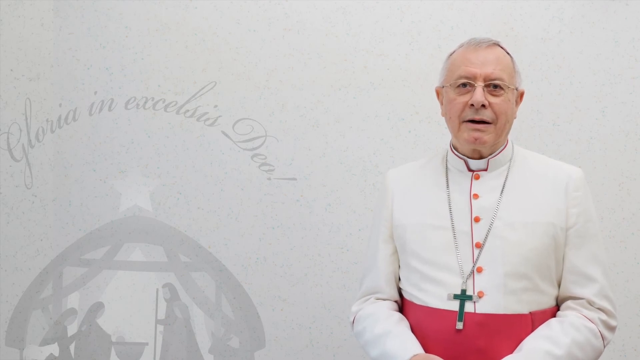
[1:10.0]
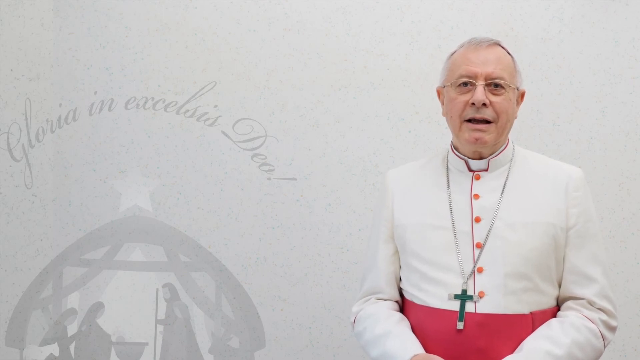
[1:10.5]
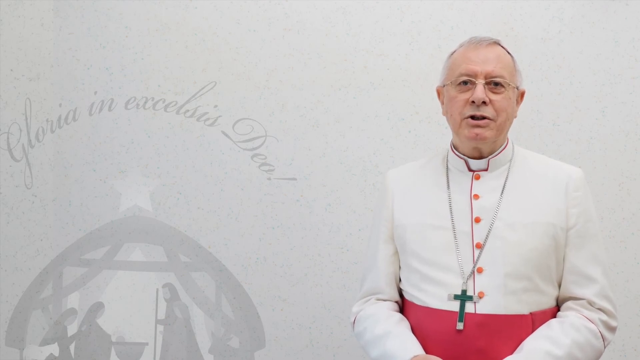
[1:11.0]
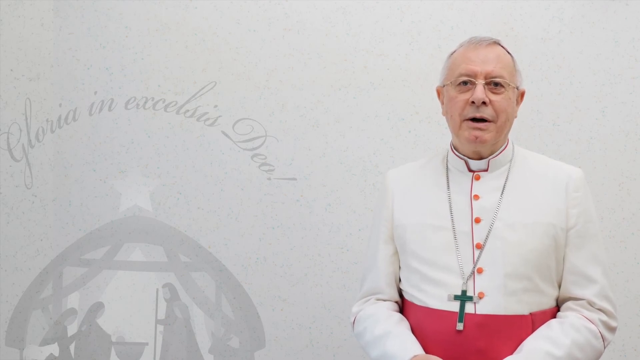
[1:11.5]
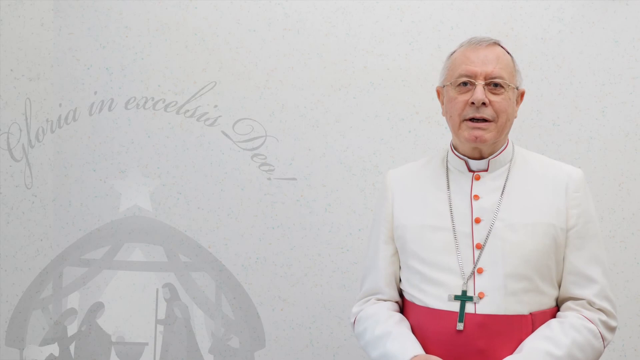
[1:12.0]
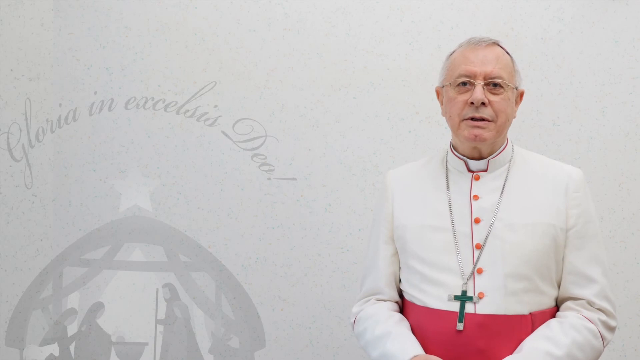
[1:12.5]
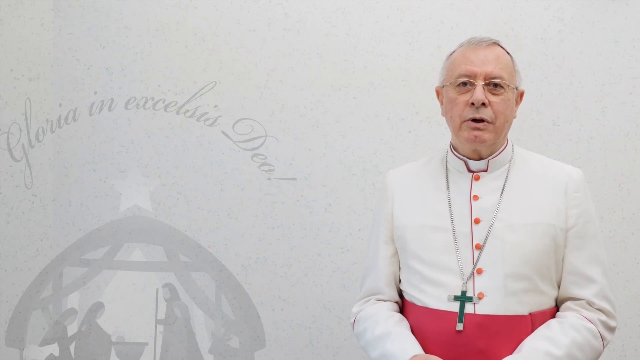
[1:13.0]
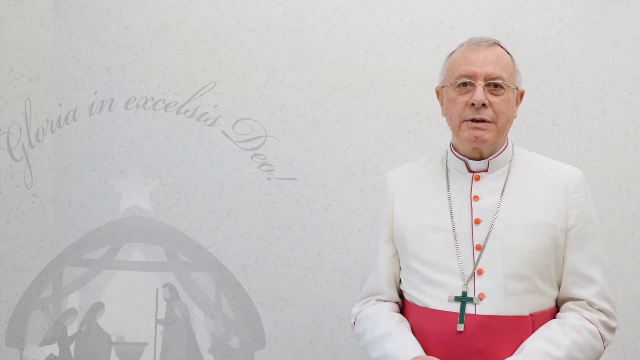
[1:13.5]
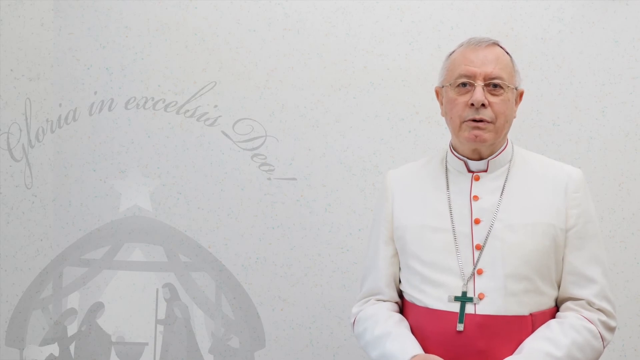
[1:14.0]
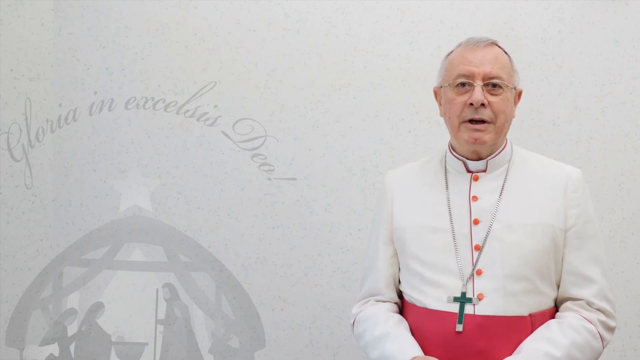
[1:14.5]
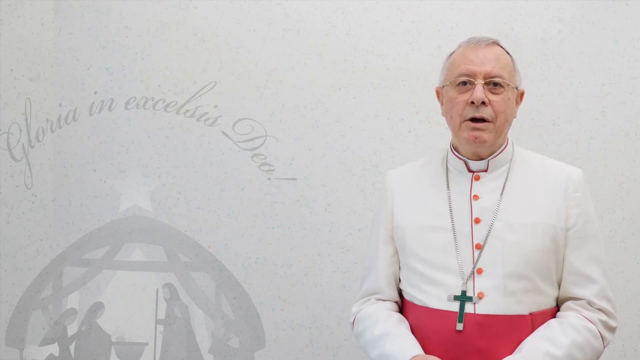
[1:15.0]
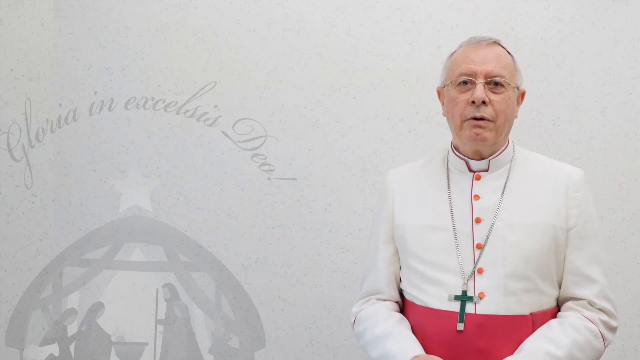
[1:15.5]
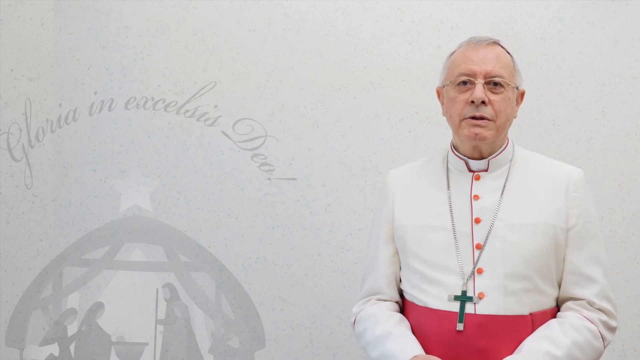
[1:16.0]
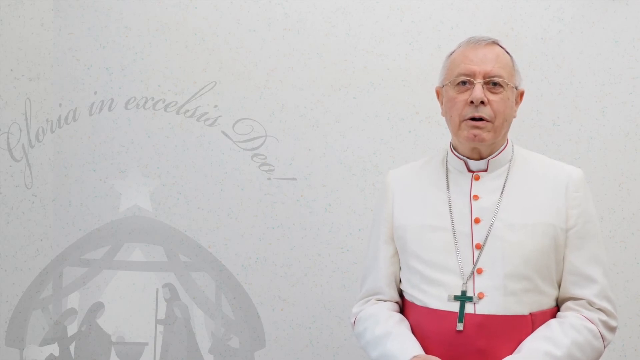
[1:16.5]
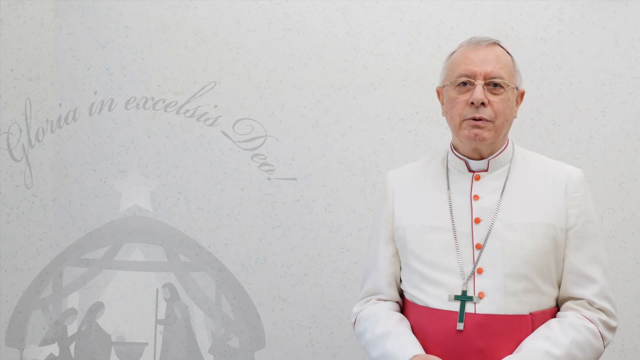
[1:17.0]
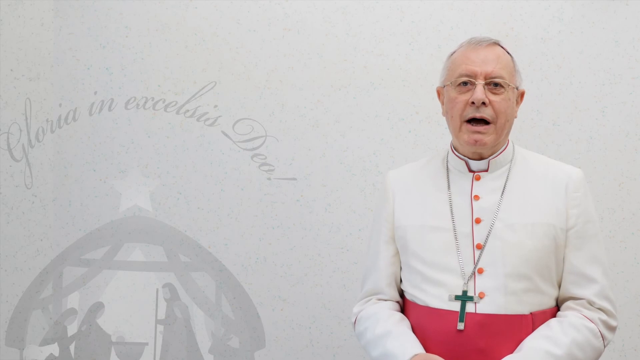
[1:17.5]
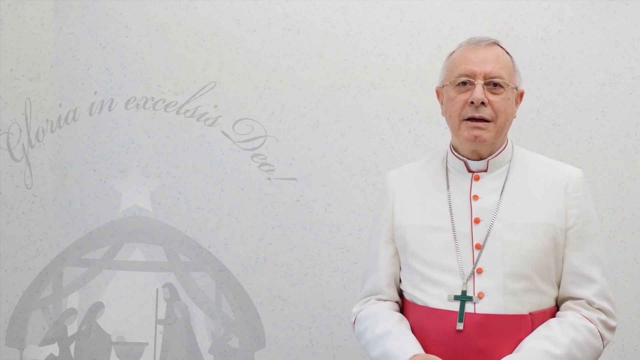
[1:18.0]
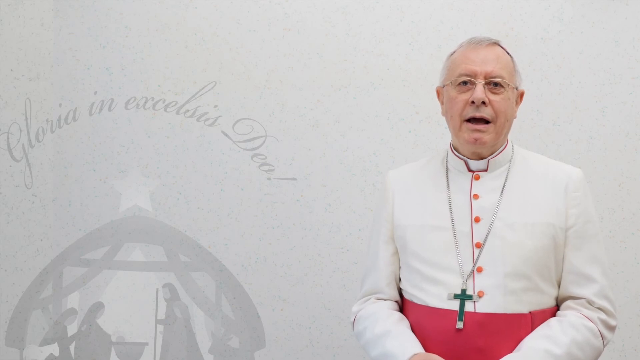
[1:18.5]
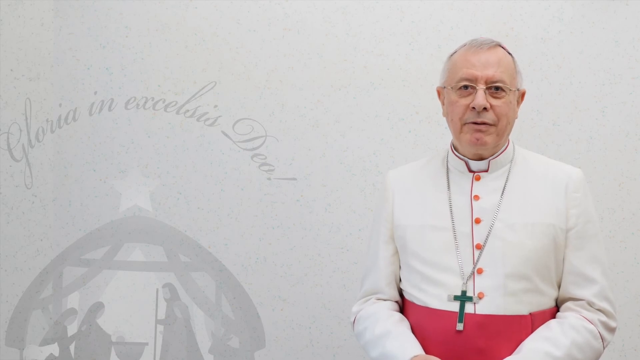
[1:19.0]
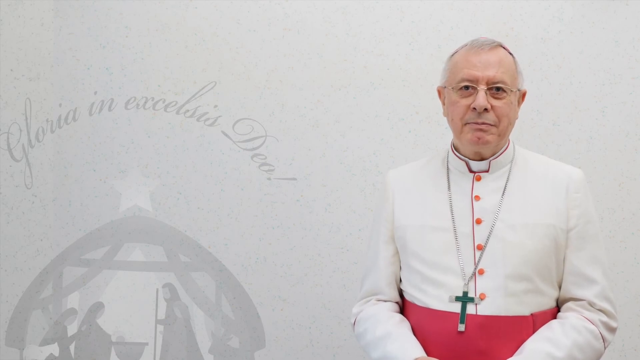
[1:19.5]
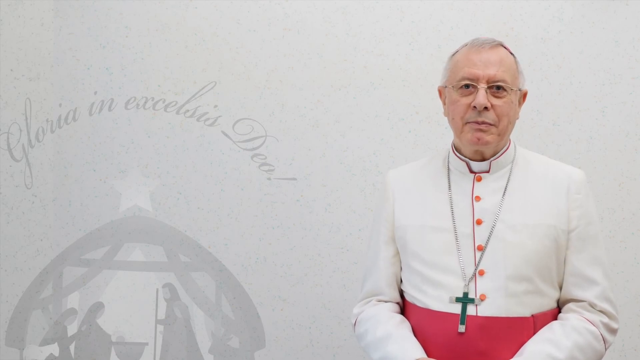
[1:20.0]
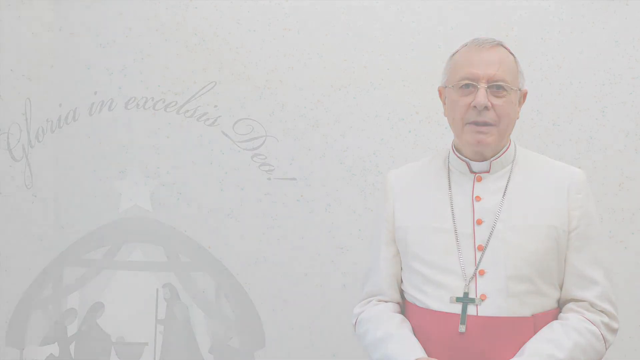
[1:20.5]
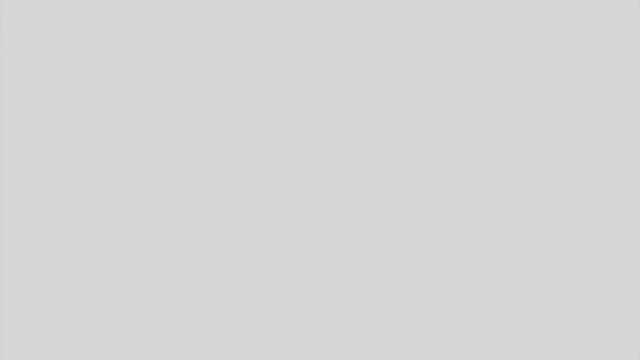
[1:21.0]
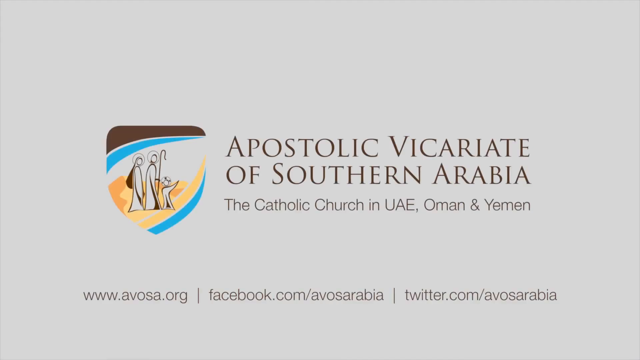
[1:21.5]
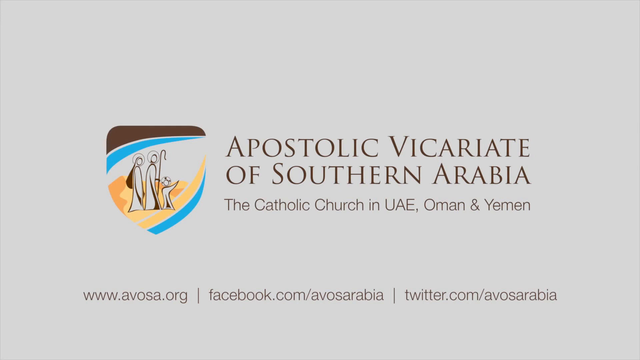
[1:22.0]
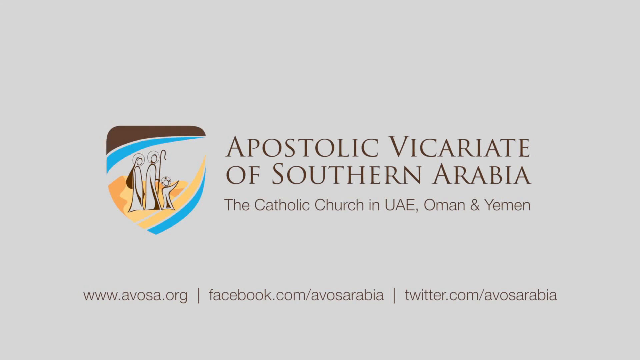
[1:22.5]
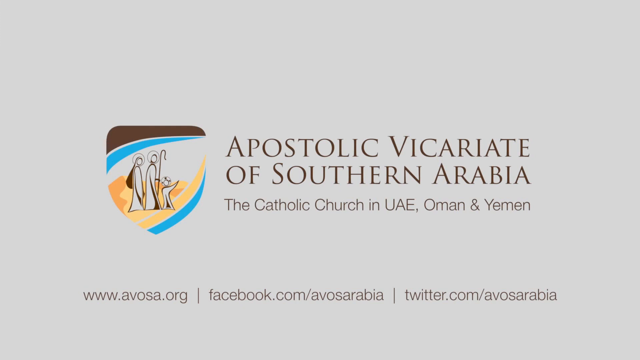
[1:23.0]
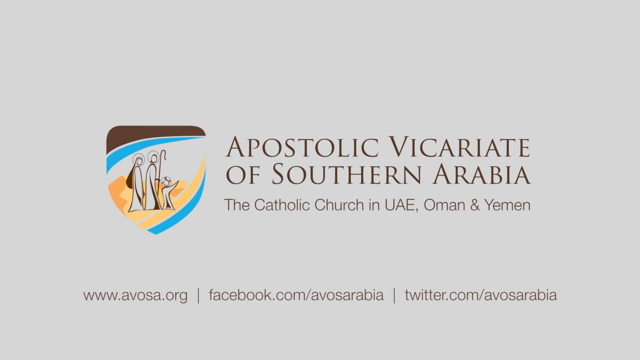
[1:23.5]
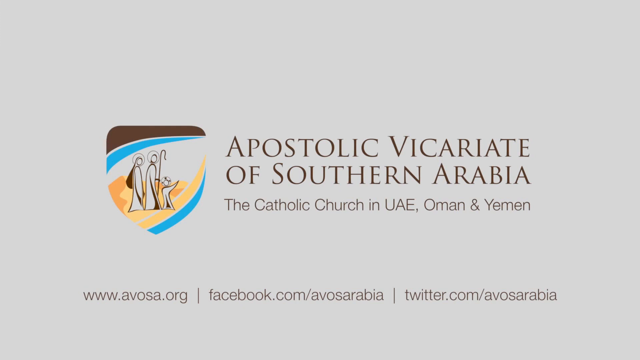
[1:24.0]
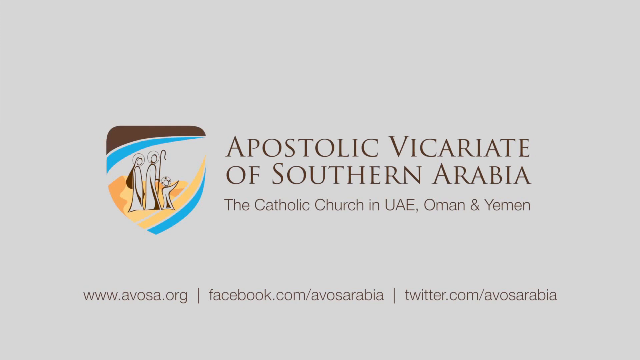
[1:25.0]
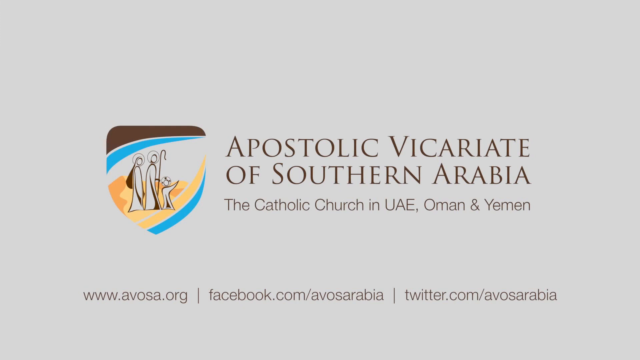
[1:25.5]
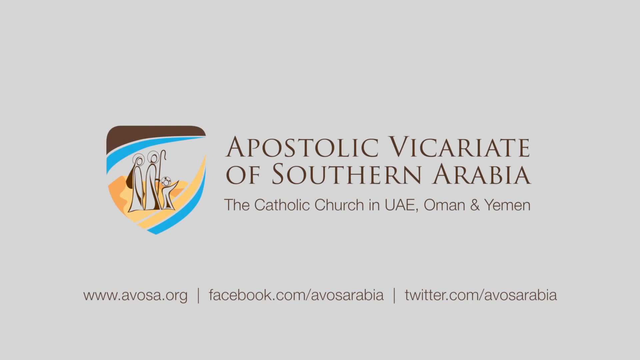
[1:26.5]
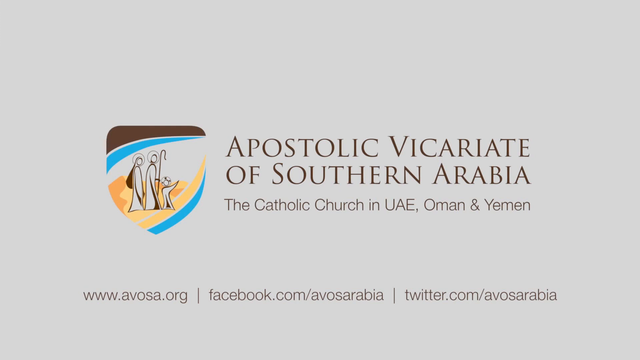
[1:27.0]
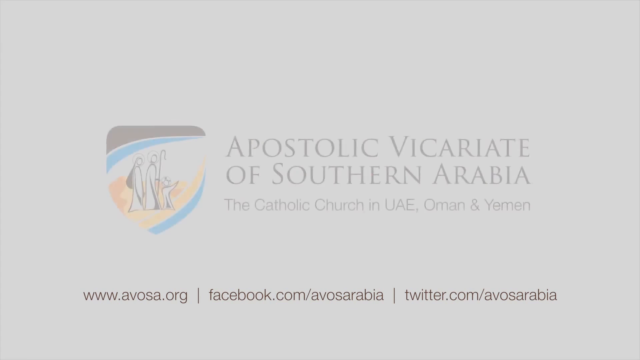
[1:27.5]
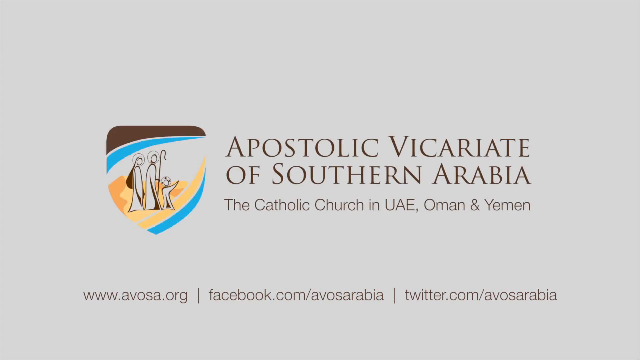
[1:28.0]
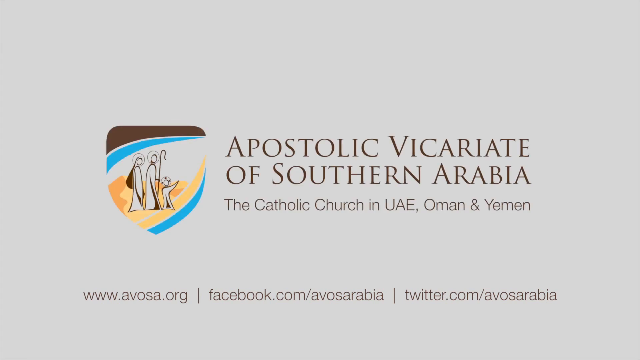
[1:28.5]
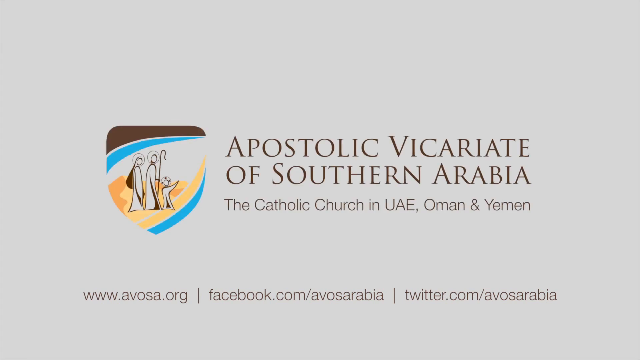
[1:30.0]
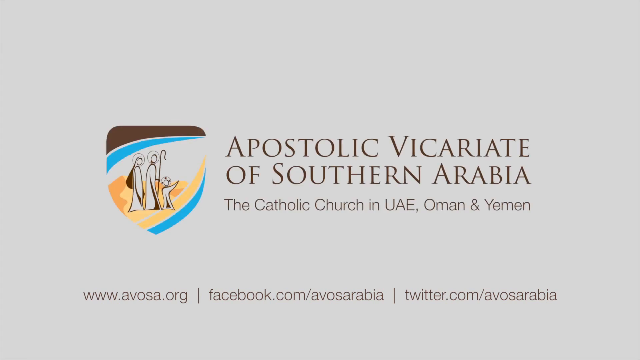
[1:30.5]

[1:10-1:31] A man dressed in priest clothing stands to the right side with a light gray background behind him. On the left side is some writing in cursive, and below it is what looks to be a nativity scene with a star above it. The man talks with a slight smile, and his arms move at times. Around his neck is a chain with a bright green cross at the end. He has something on top of his head and wears glasses. A light red or pink belt goes around his midsection, and several light red or pink buttons go down his garment.